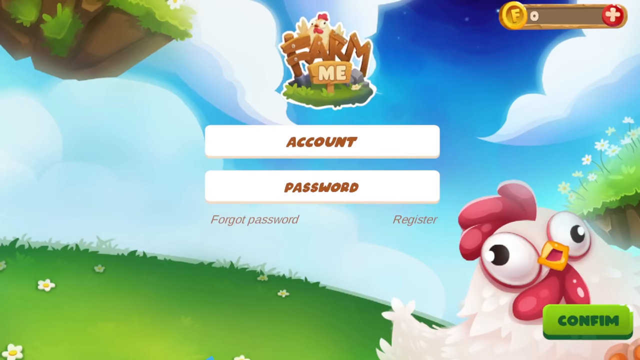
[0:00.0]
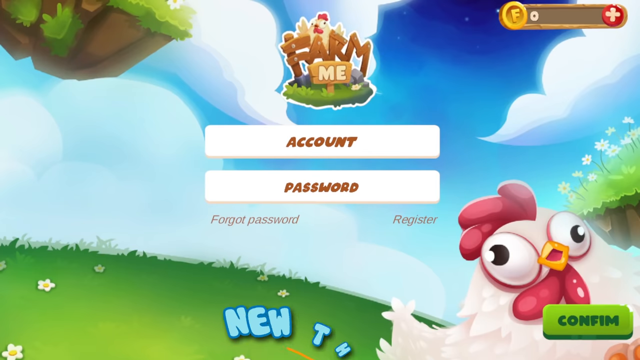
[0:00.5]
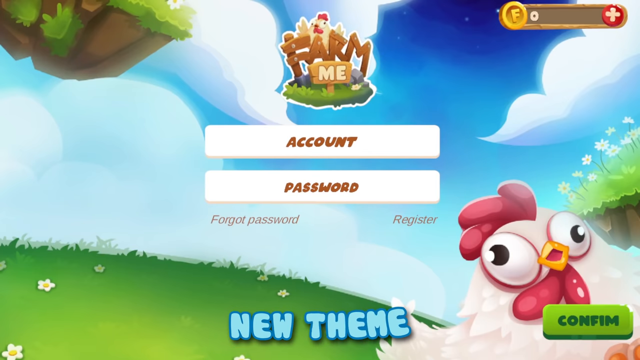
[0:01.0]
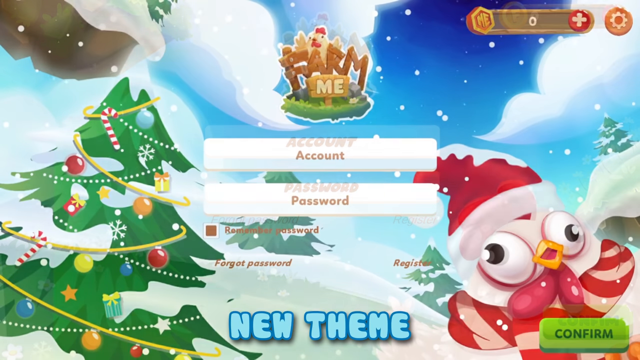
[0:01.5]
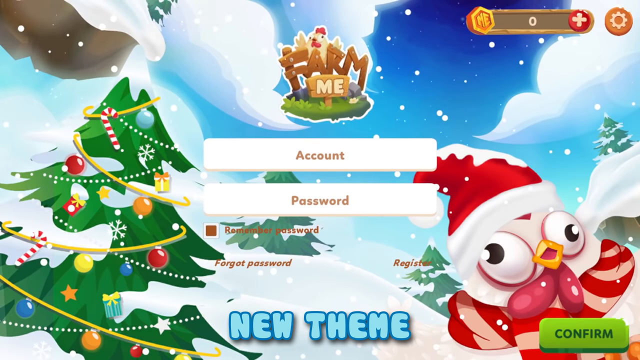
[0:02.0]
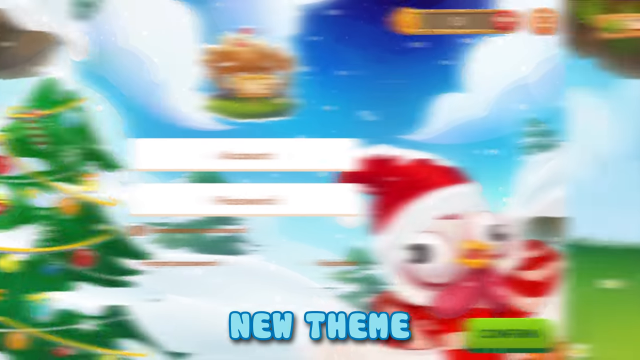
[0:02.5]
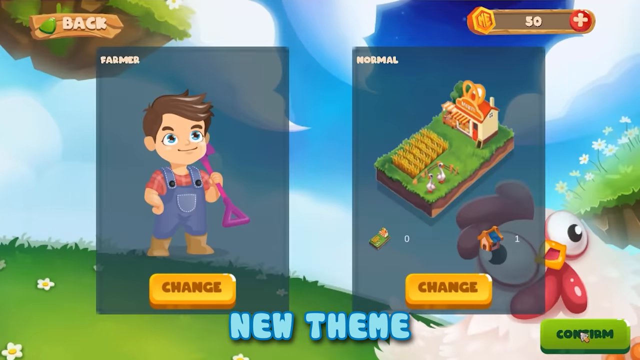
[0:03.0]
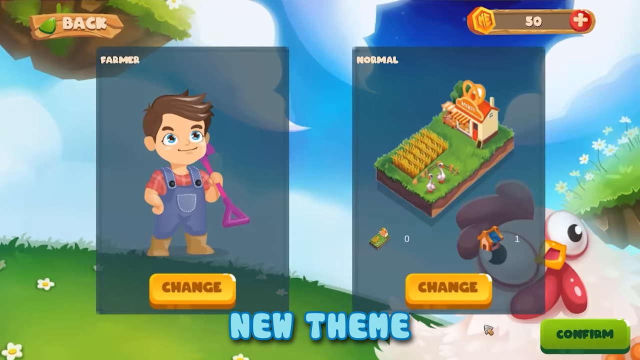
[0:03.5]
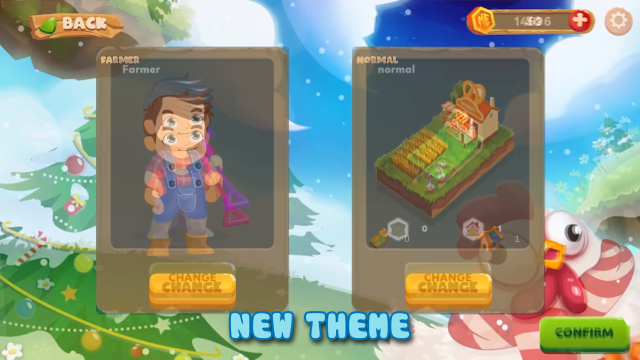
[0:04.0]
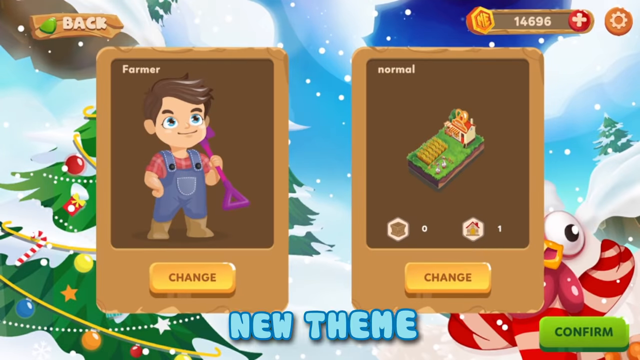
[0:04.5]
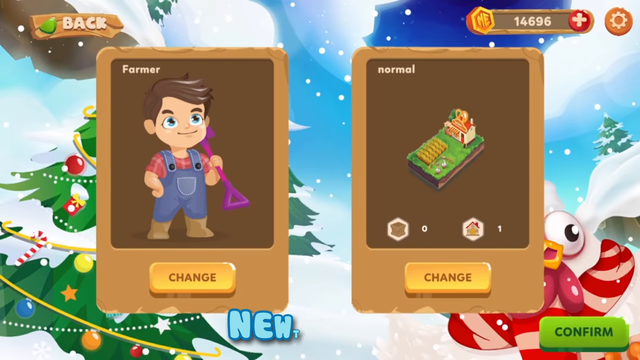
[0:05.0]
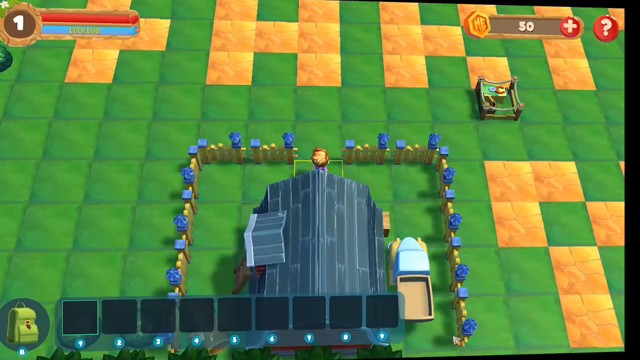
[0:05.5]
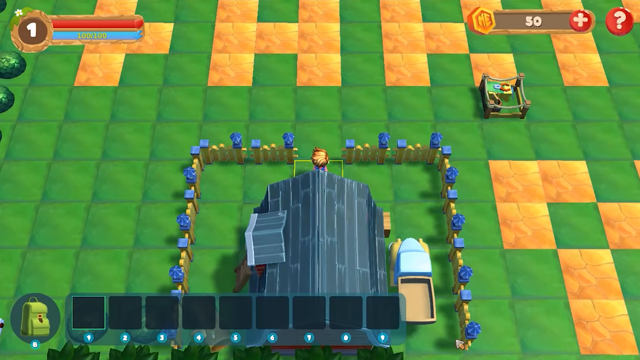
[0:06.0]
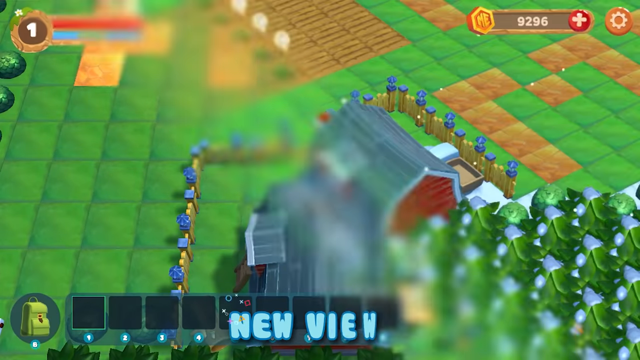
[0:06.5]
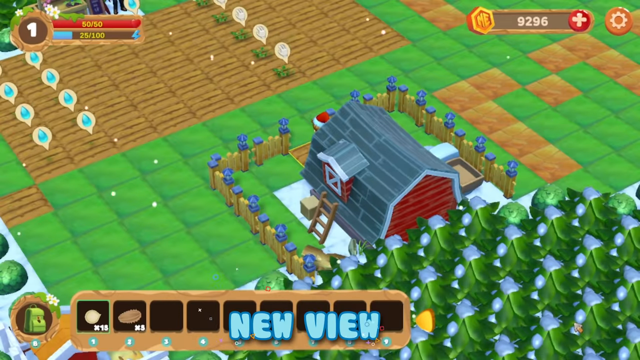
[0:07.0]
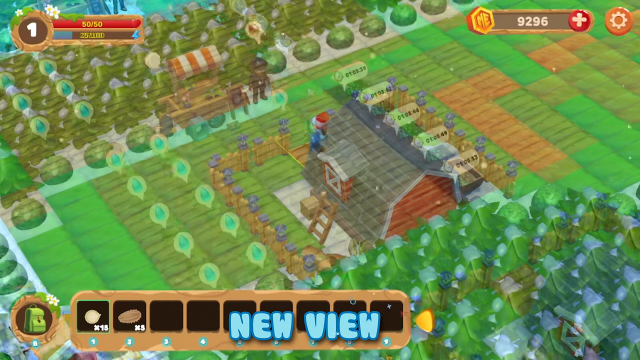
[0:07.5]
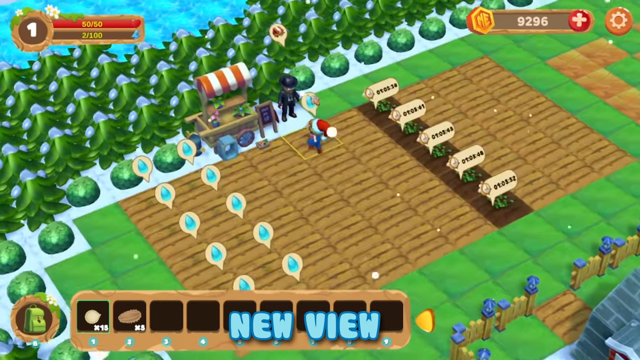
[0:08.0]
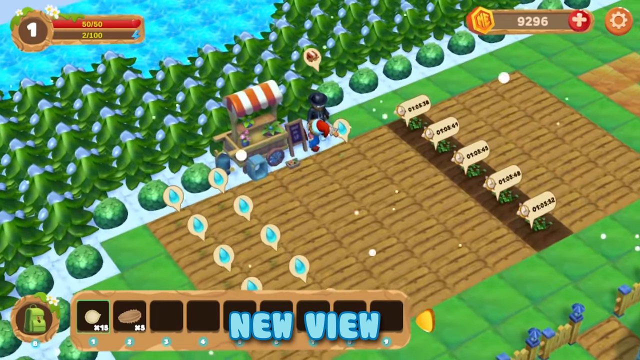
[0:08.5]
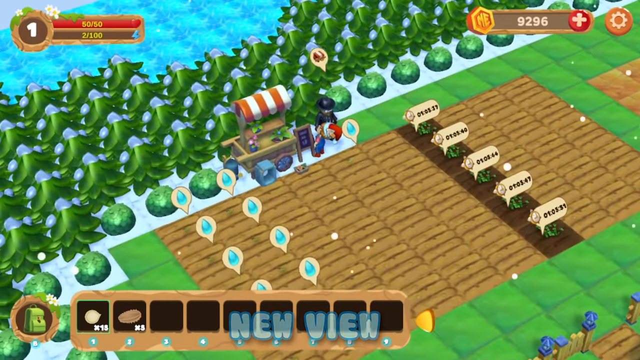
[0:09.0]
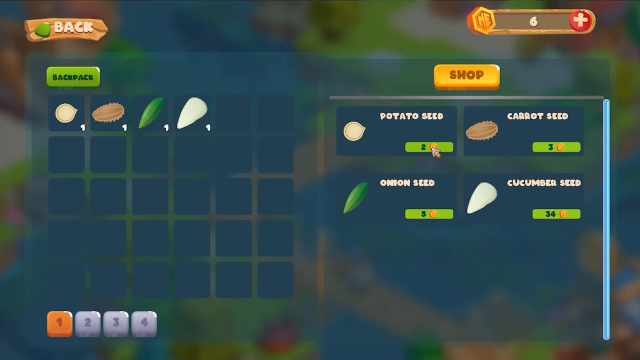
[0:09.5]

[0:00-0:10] What looks like a small farm-style game is on screen, with the text "account", "password", "remember password", "forgot password", "register" and "new theme". There is a little chicken, or something like one, and a Christmas tree at the bottom of the screen. There are farmer and normal options and a change option, apparently letting the player pick a theme. It looks like some type of role-playing farm game where the player apparently gets to make things, and the screen has a lot of different colors.